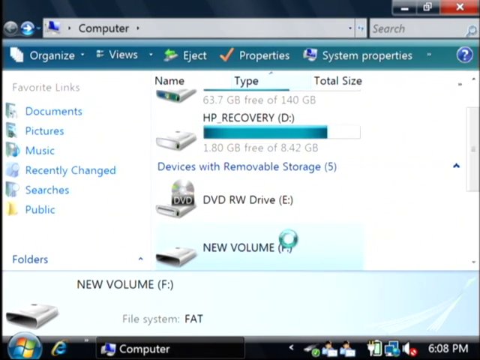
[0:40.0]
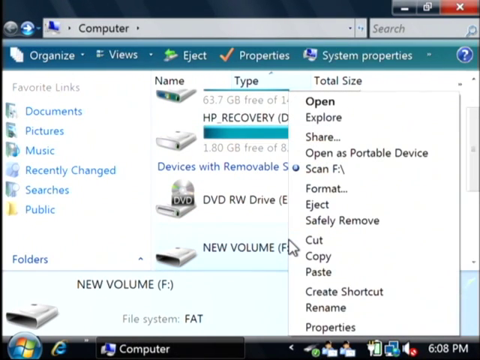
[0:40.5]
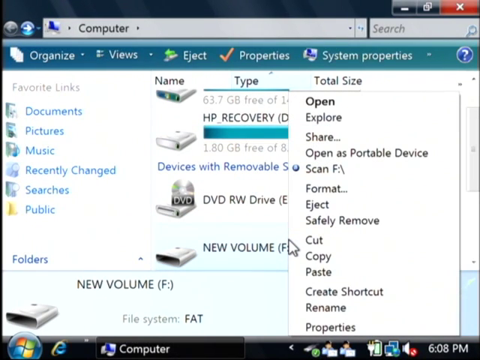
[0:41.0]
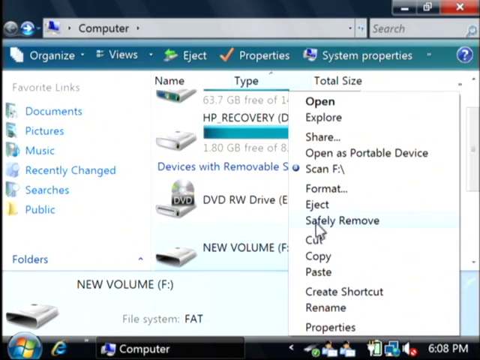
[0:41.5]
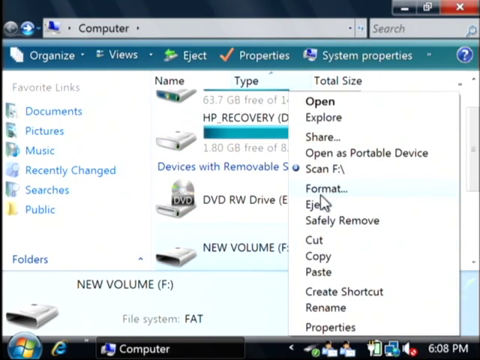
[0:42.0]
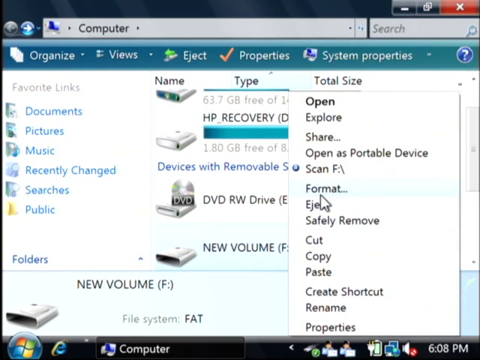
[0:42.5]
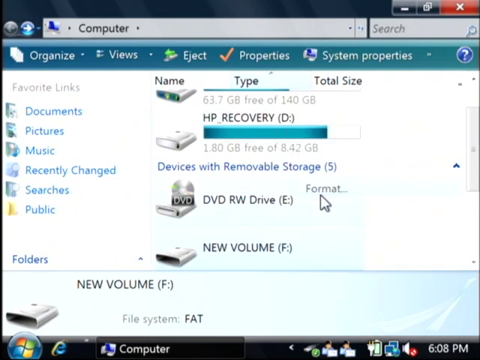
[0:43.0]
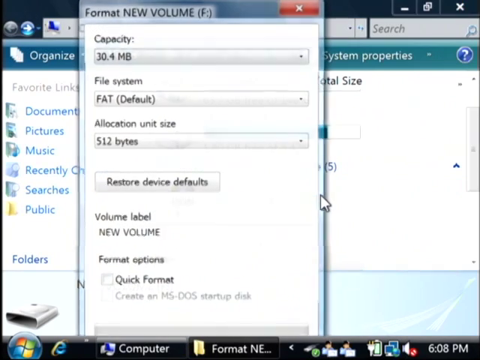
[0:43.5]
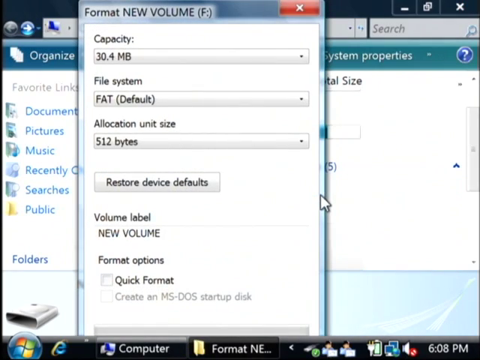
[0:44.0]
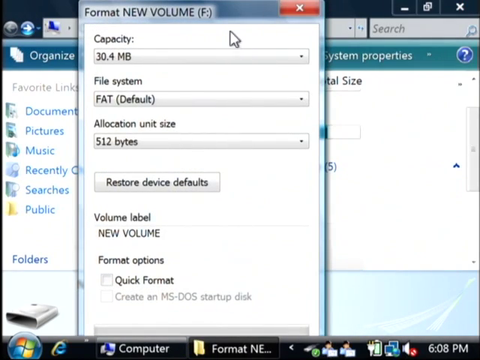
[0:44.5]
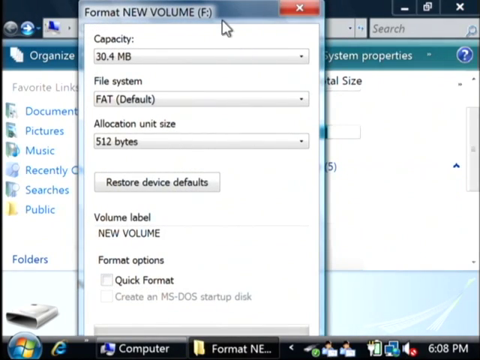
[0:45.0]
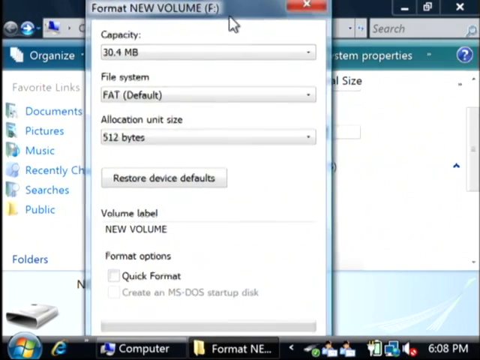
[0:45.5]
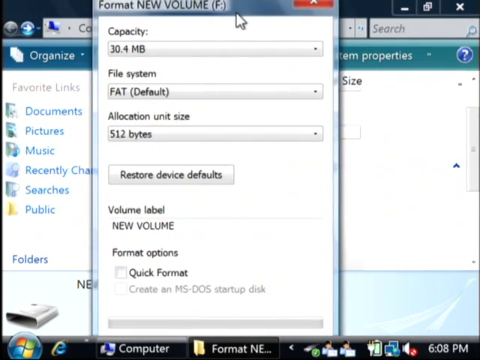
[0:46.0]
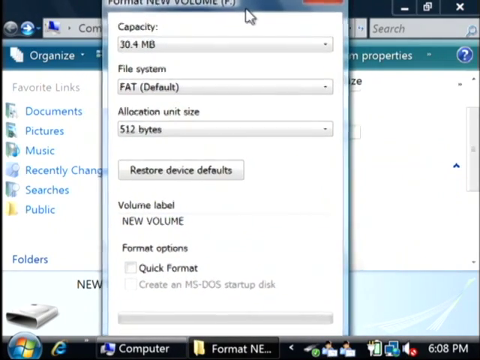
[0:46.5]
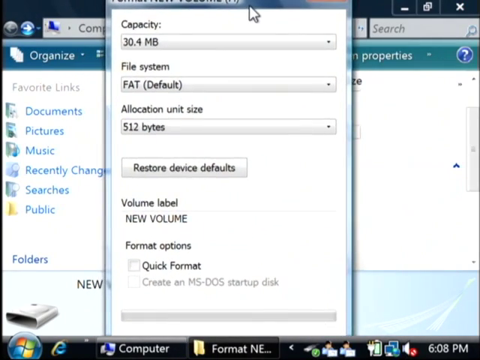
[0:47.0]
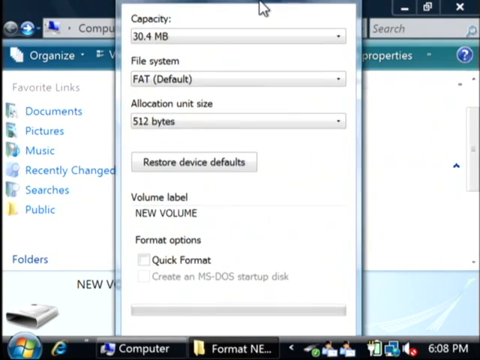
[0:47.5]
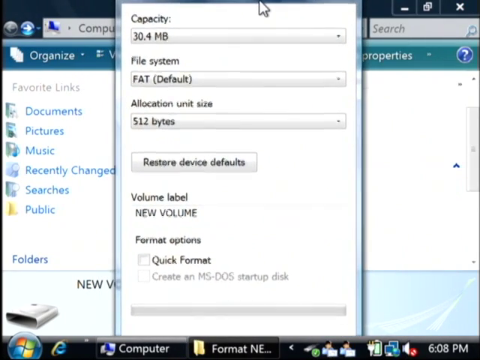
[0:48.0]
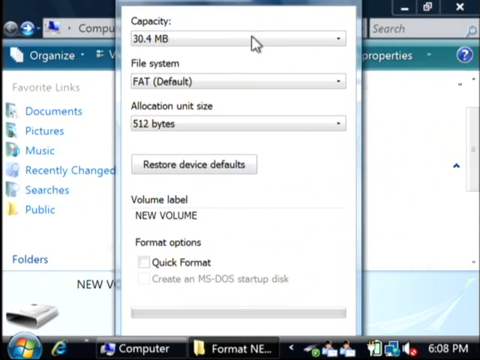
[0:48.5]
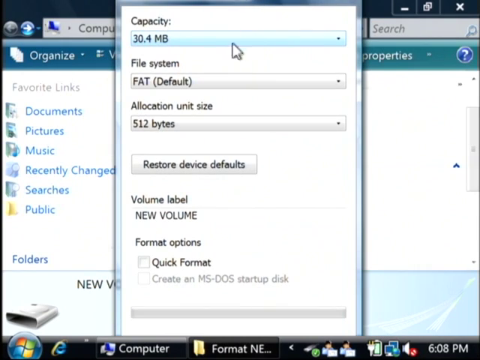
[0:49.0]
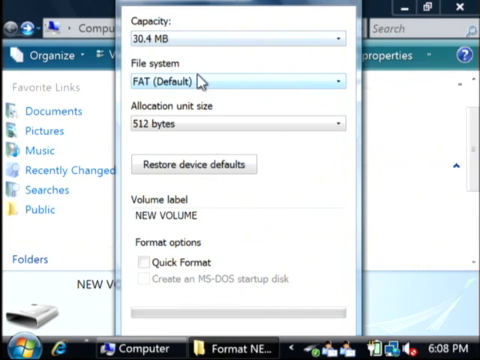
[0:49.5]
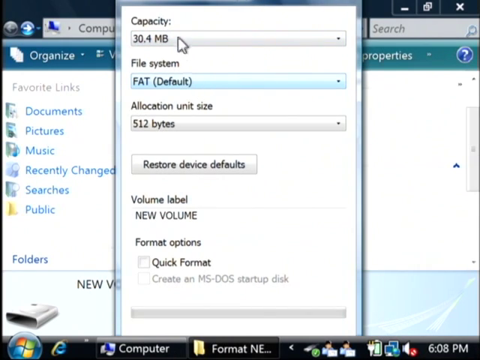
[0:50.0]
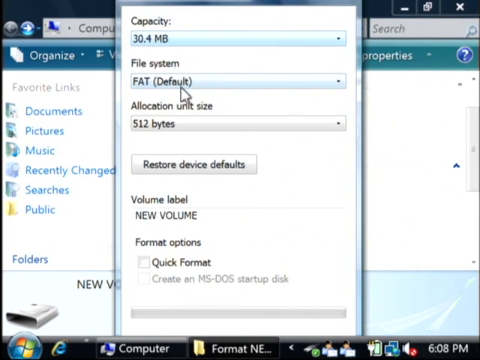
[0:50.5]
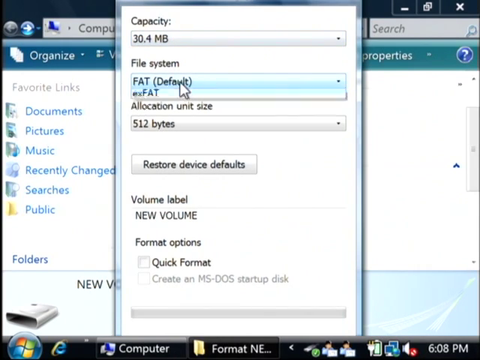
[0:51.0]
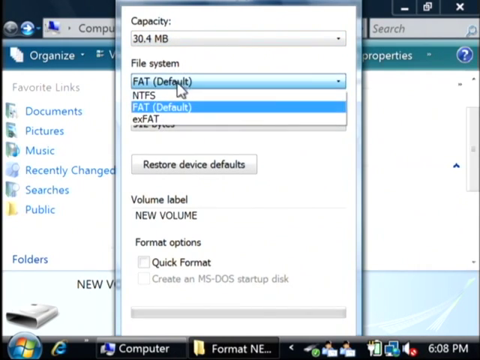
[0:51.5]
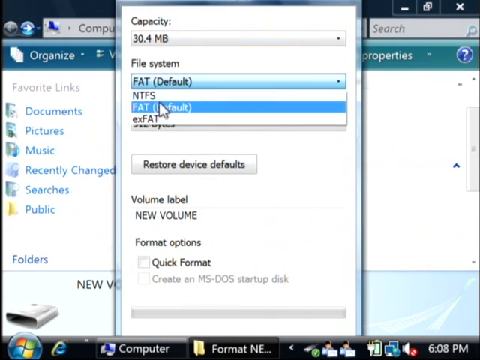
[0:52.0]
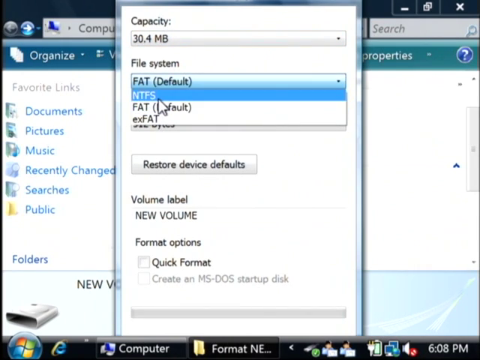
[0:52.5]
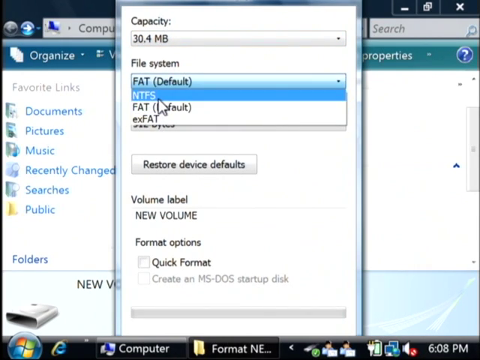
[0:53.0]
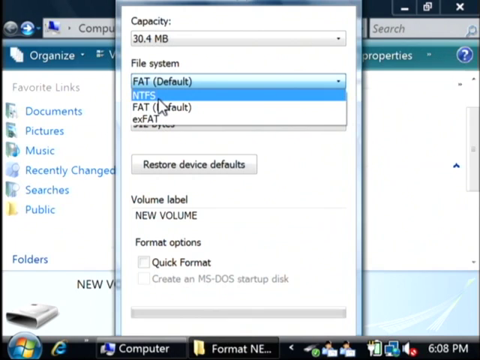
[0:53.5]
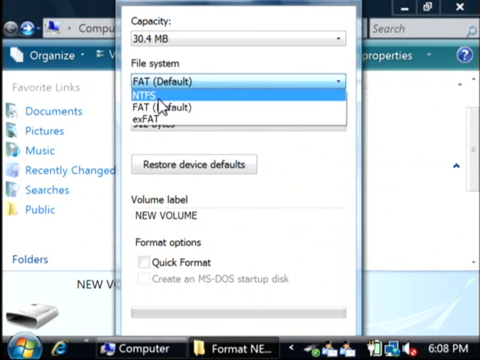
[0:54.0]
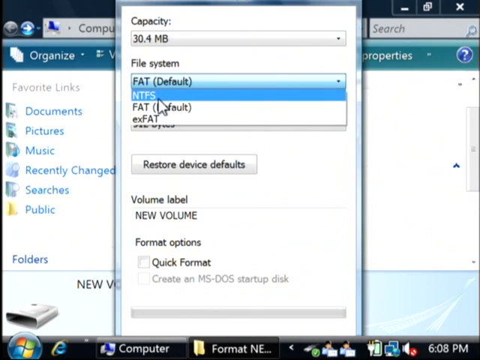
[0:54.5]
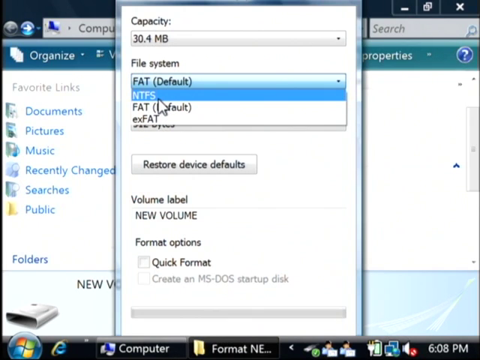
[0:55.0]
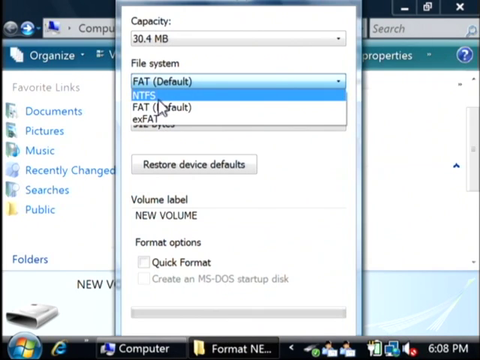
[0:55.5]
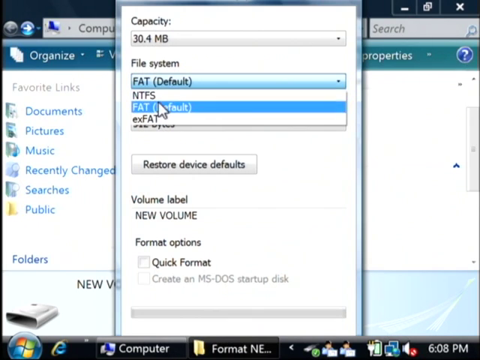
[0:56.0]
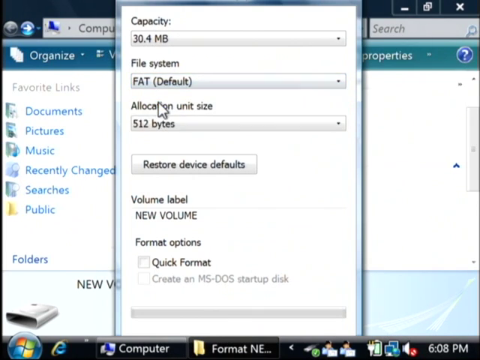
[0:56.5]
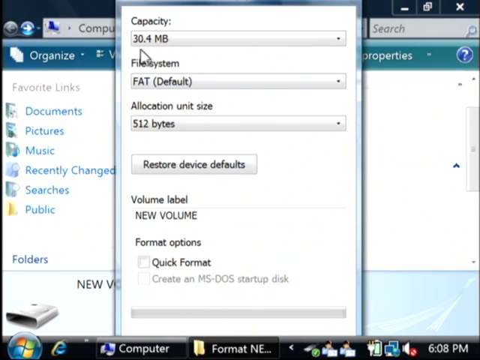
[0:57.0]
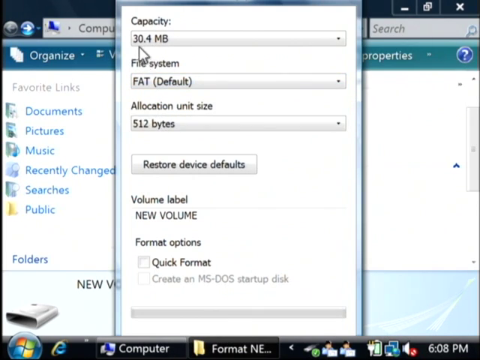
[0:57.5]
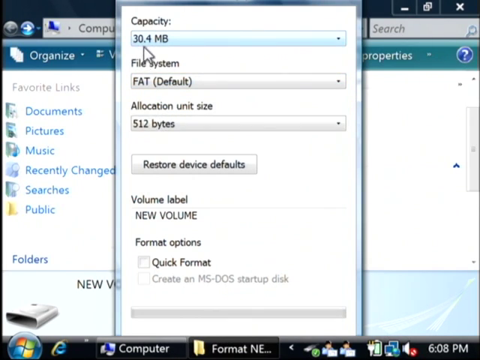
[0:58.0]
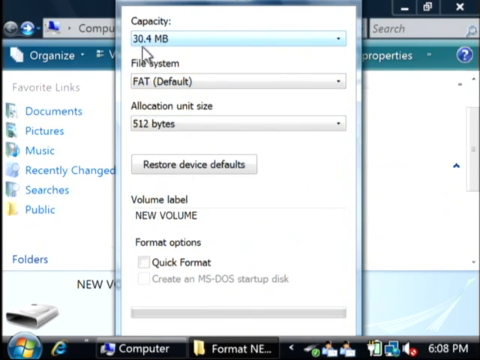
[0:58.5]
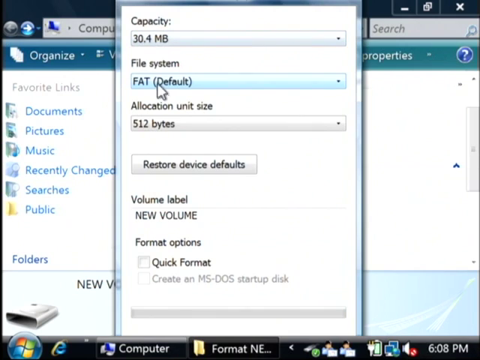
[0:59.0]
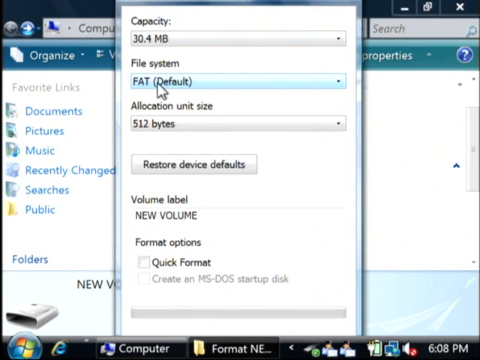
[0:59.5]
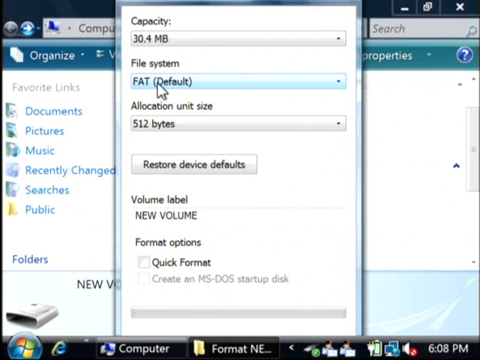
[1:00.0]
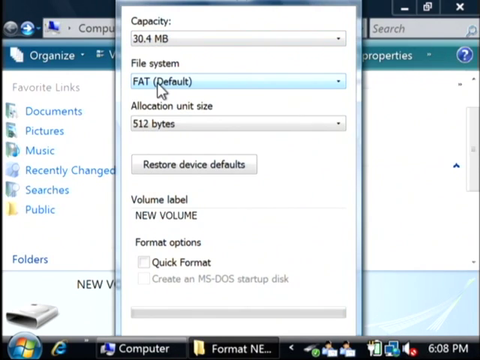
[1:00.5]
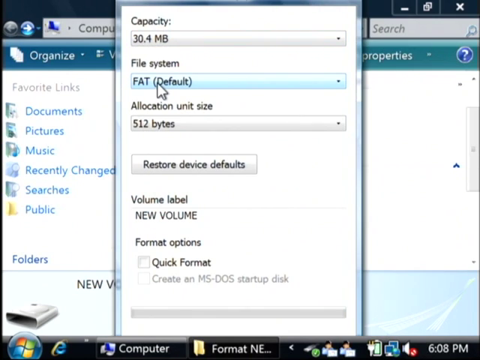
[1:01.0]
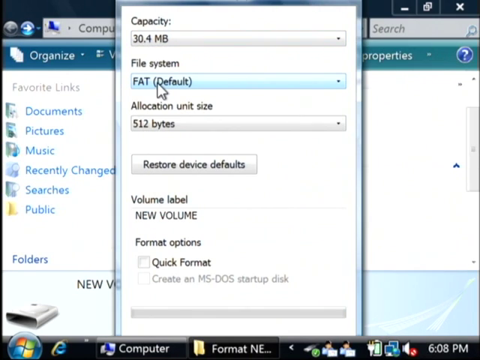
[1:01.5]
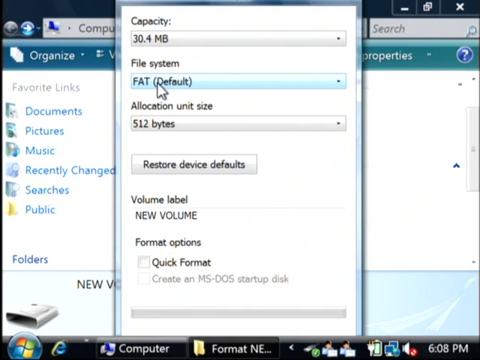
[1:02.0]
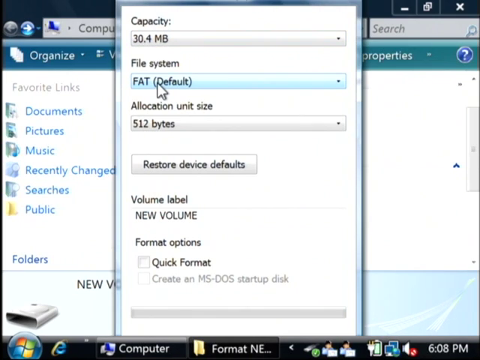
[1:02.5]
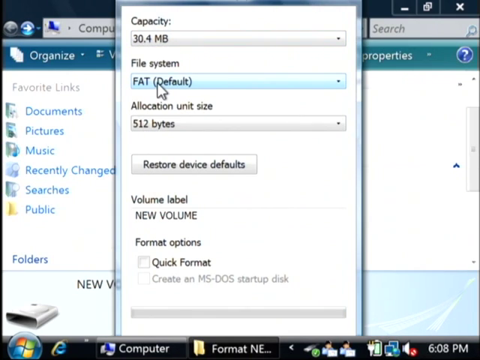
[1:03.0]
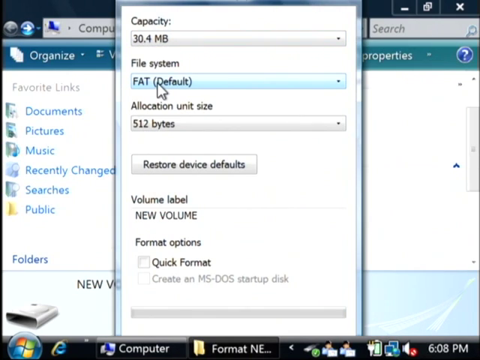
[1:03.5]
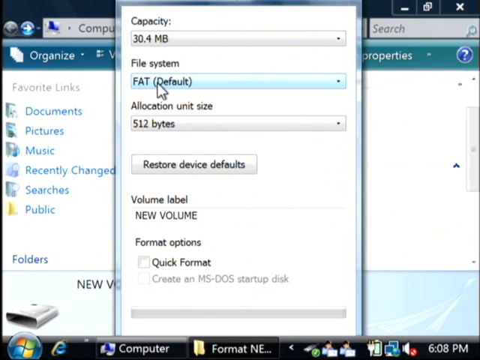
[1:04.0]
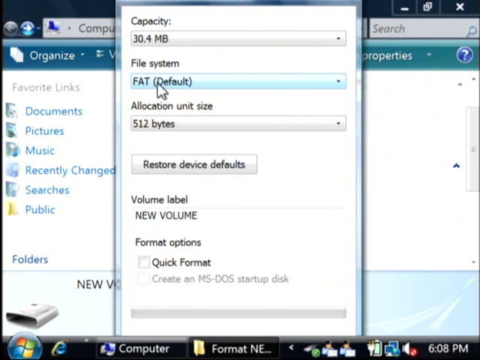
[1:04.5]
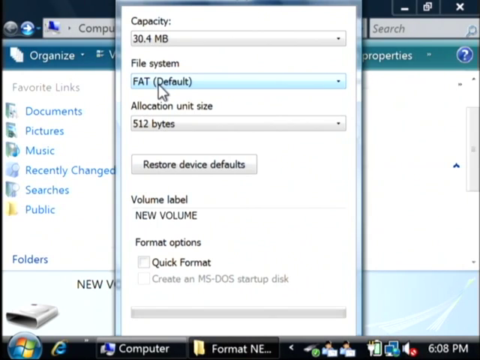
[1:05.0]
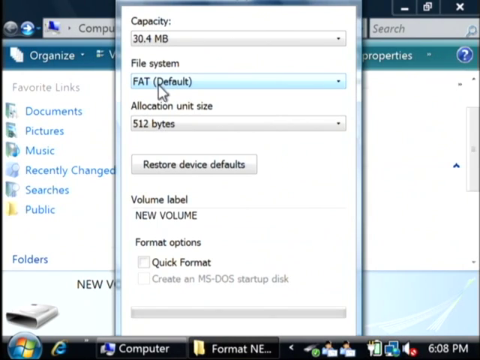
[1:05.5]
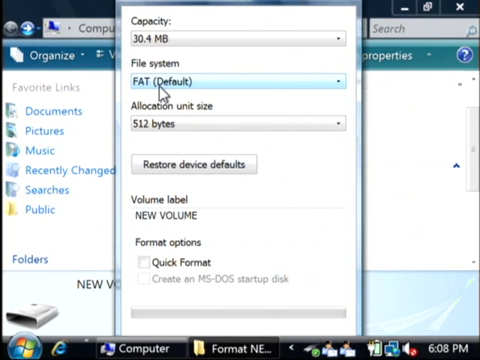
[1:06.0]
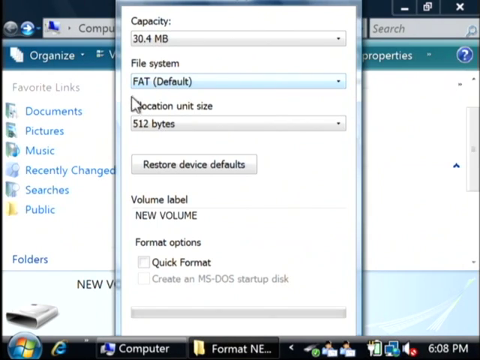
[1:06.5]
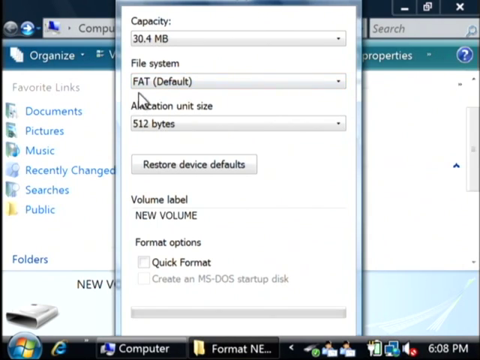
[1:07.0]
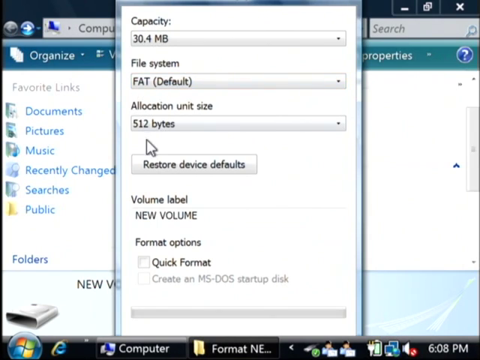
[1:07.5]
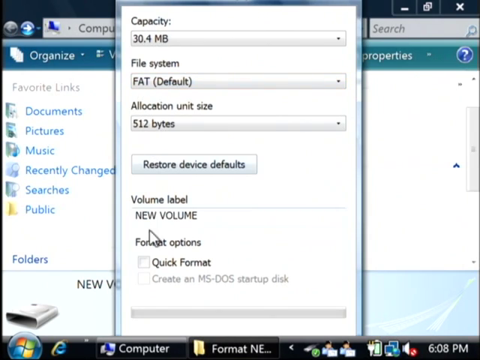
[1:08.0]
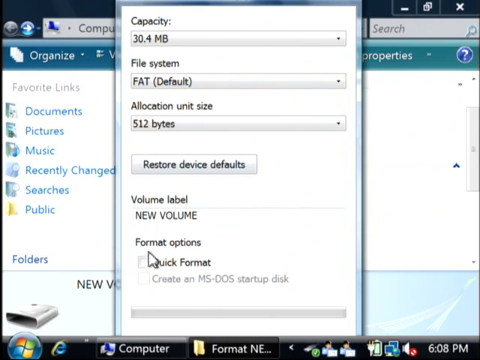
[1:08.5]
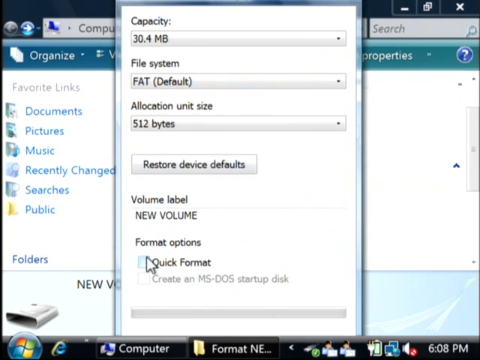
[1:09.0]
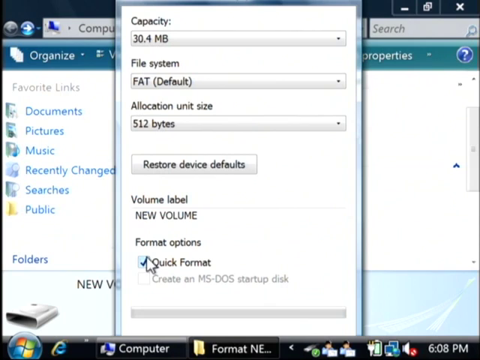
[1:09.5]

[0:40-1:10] He right-clicks on New Volume F, bringing up a list of actions such as open, explore and share. The mouse moves to click Format, which opens a small window in the center reading "Format New Volume F". It shows the capacity of the drive, 30.4 megabytes, the file system, FAT, and the allocation size. He drags the window to the very centre of the screen, clicks on File System to open a drop-down menu and chooses NTFS. He then looks at the capacity and the FAT default file format section, moving the mouse around the window, and moves the mouse down to Quick Format under Format Options.